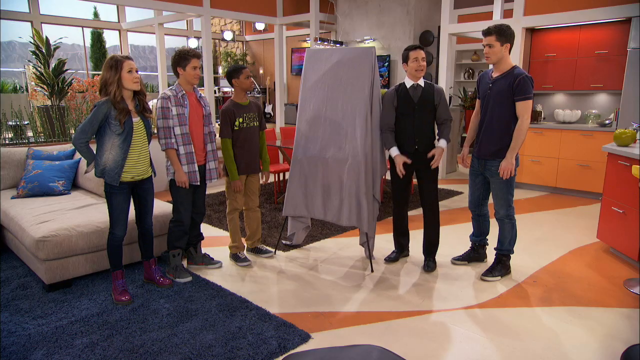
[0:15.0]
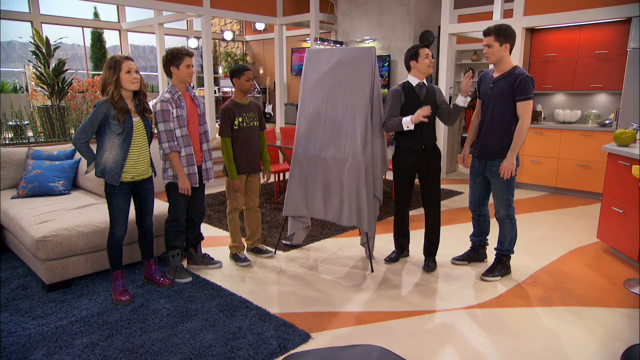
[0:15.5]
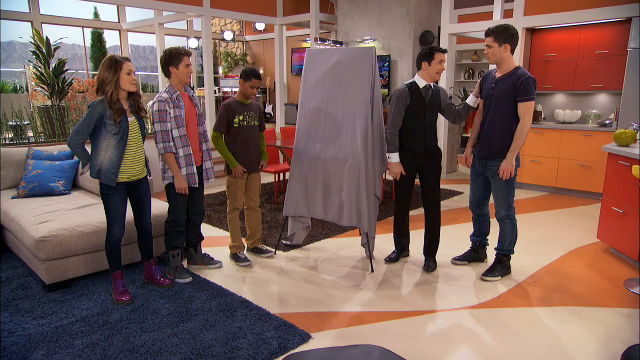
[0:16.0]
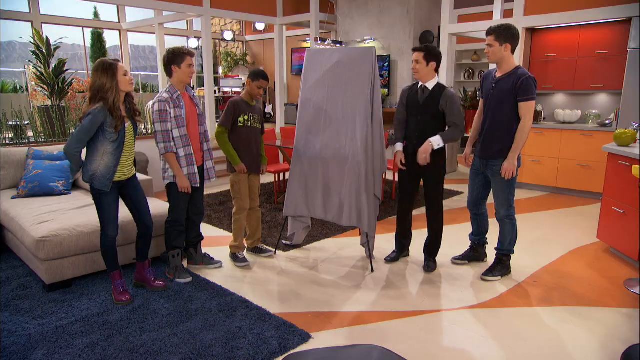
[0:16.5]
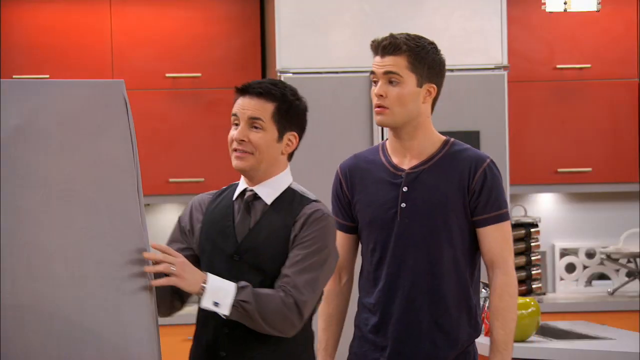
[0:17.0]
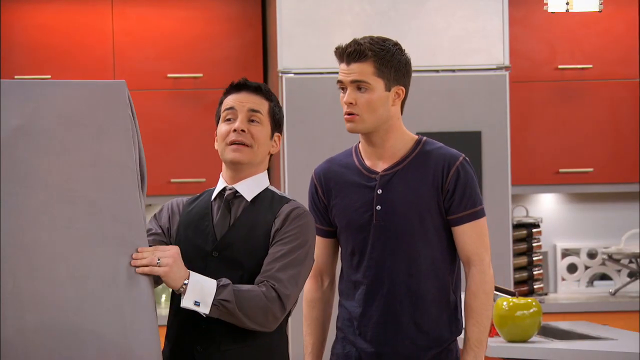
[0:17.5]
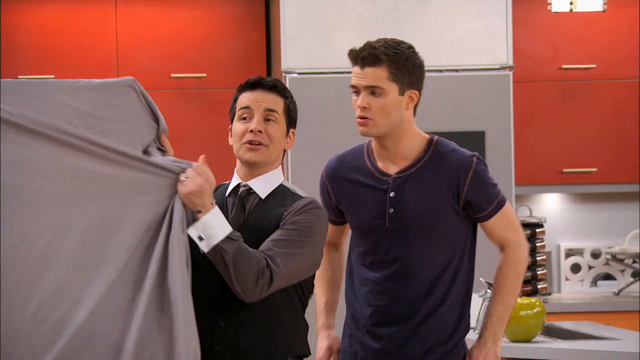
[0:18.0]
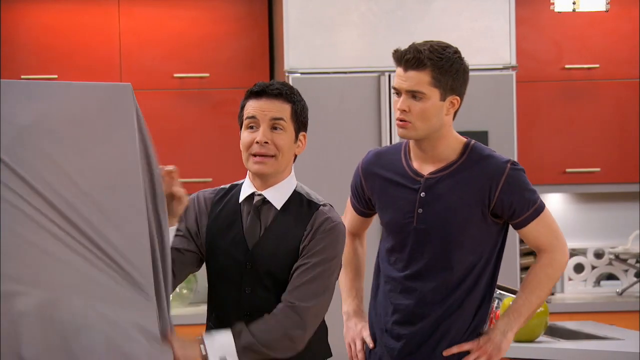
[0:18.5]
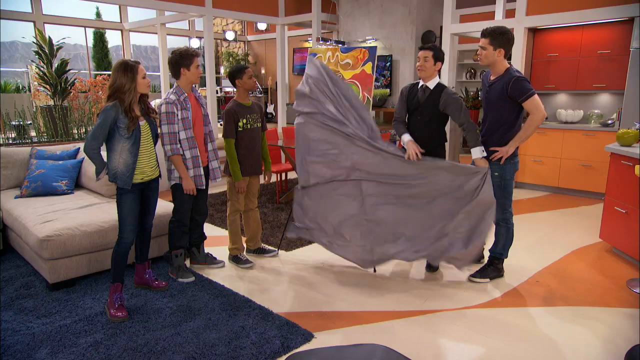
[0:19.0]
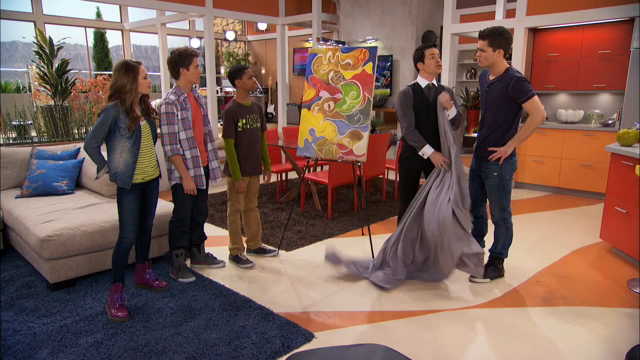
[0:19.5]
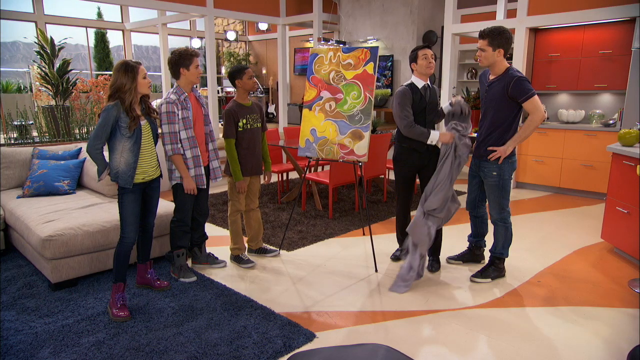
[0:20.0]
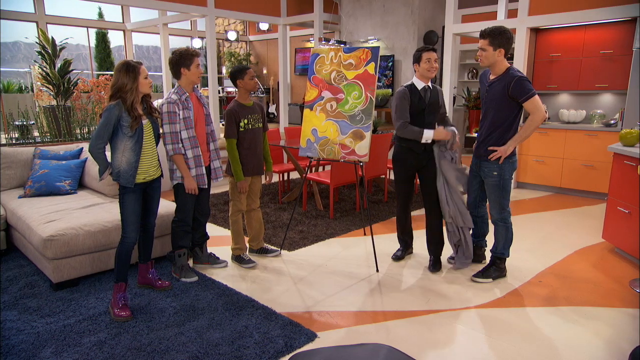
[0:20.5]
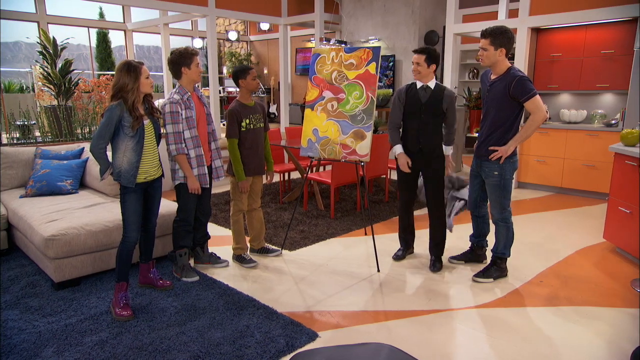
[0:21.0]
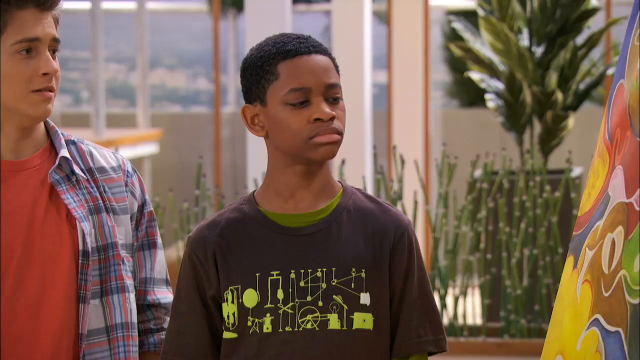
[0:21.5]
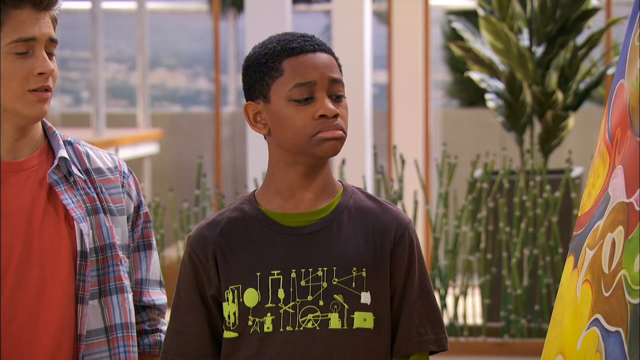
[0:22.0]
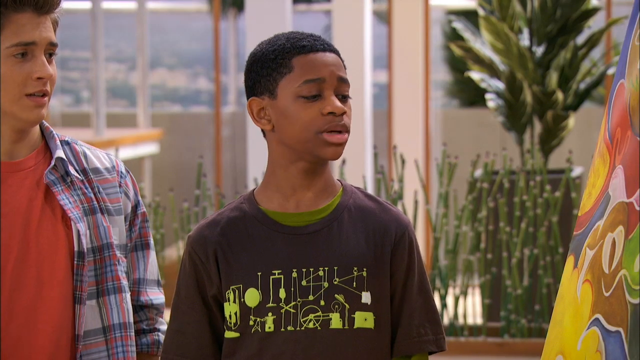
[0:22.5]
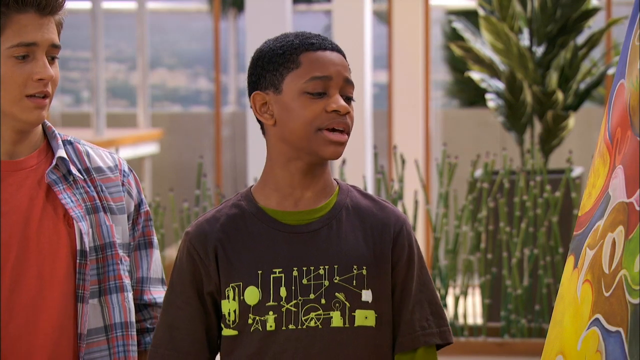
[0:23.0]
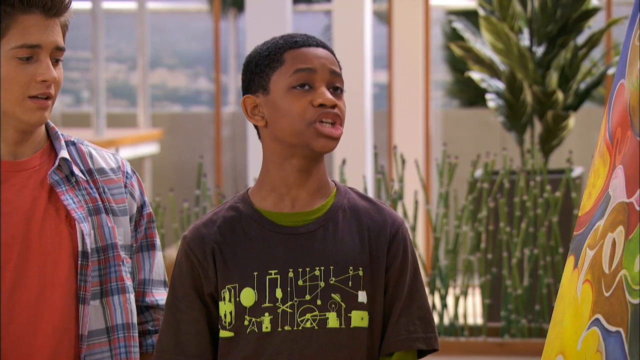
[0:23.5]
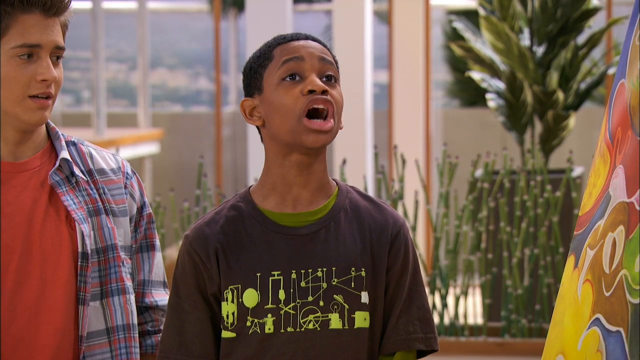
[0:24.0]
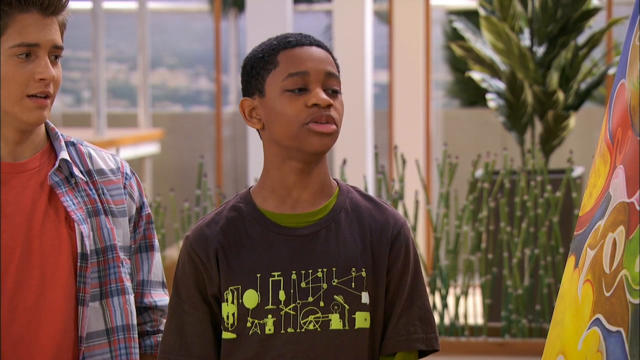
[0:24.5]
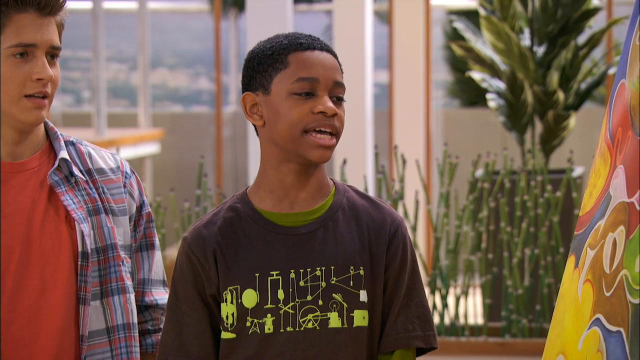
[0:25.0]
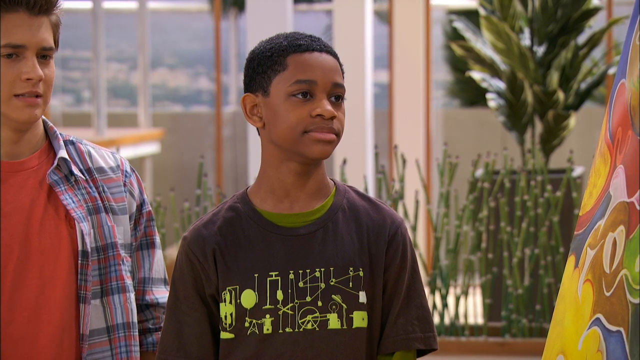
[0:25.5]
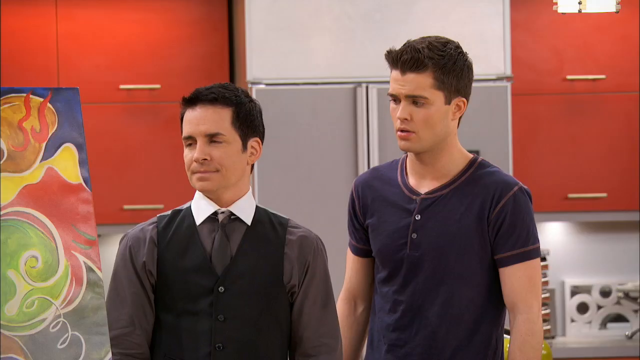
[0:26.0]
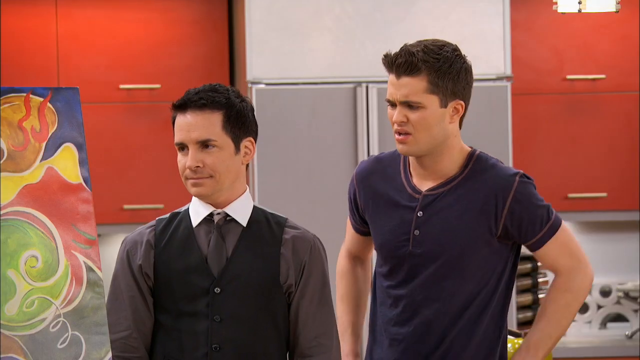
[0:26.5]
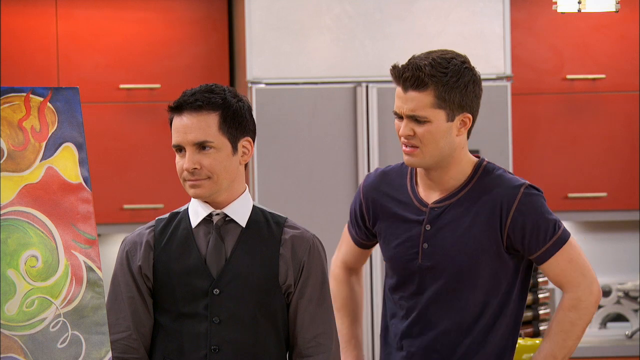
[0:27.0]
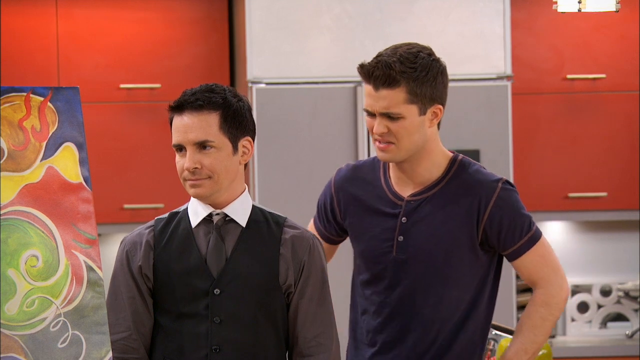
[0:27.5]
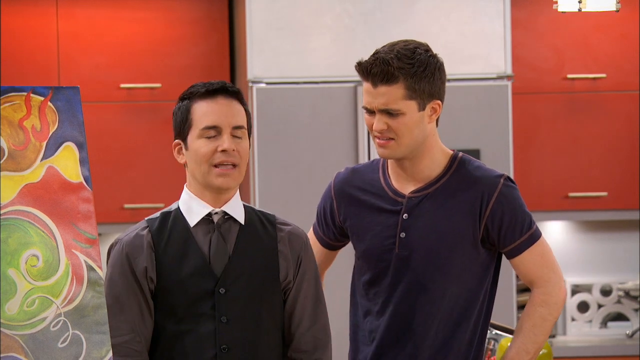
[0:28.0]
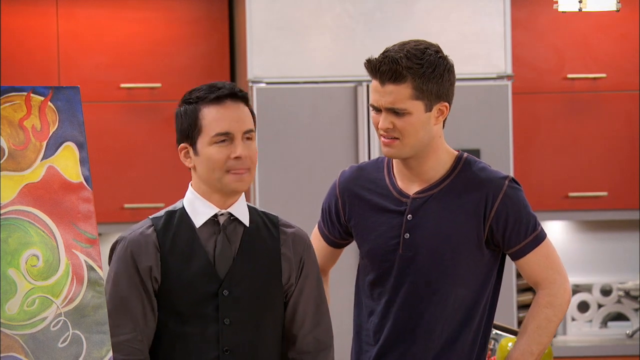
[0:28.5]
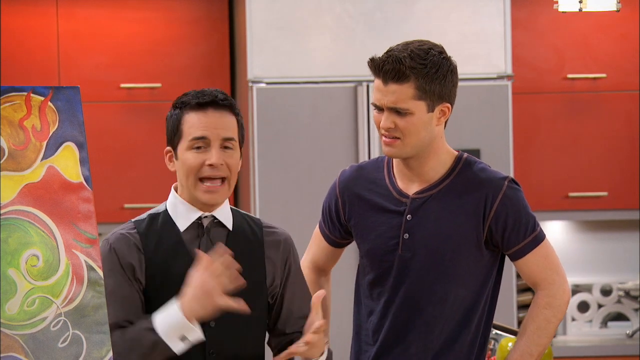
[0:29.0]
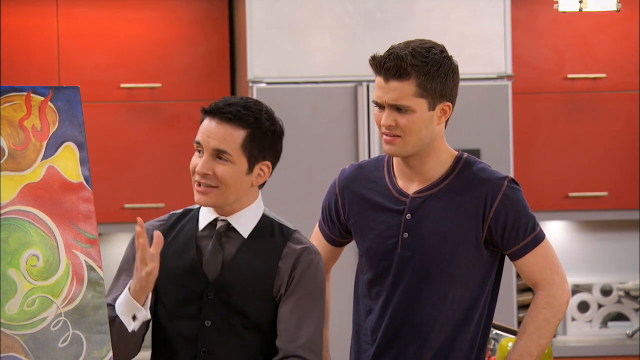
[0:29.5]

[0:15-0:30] The man continues to gesture with his hand, talking to the man at his side and to the three teenagers across from him. The teenagers are two boys and a girl; one boy is black, and the other boy and the girl are white. The boy in the center wears a plaid shirt over a red shirt and black jeans. The girl beside him wears her hair in a headband, a green striped shirt with a denim shirt over it, and burgundy boots, and she is standing on a blue carpet. The camera pulls back out as the man is about to pull the sheet off the easel in front of him. He does so, revealing a fairly large abstract painting with multiple colors and filled-in squiggles of shapes. He steps back and explains something to the man beside him and the kids in front of him. They nod at the painting in appreciation and ask him questions, while the man at his side puts his hands on his hips as though he doesn't understand something being said. Behind them in the kitchen are accent pieces such as porcelain bowls and a porcelain apple.